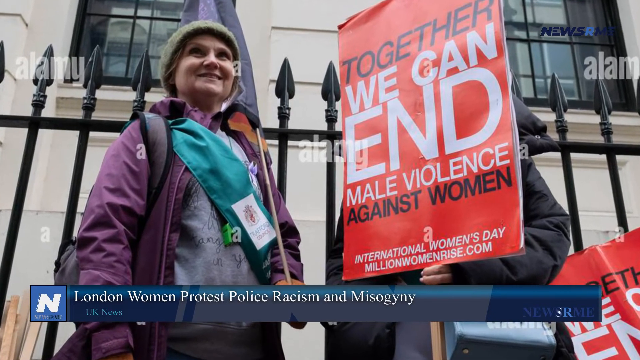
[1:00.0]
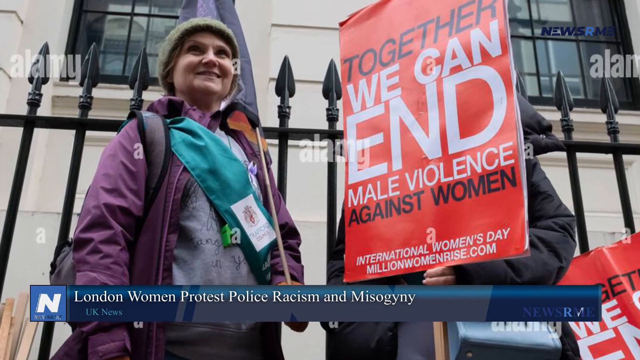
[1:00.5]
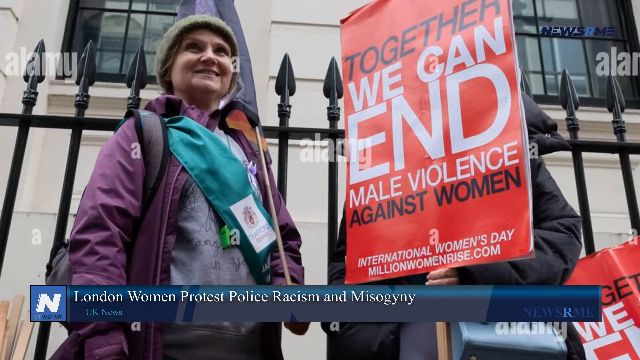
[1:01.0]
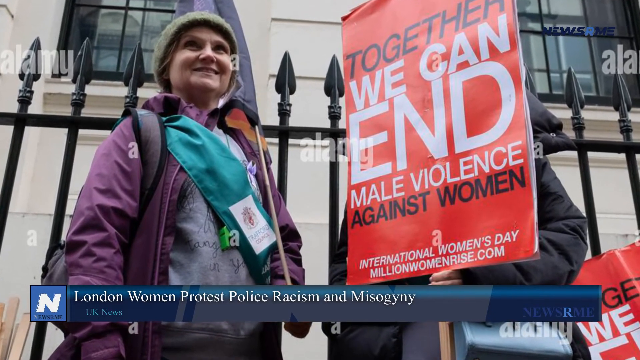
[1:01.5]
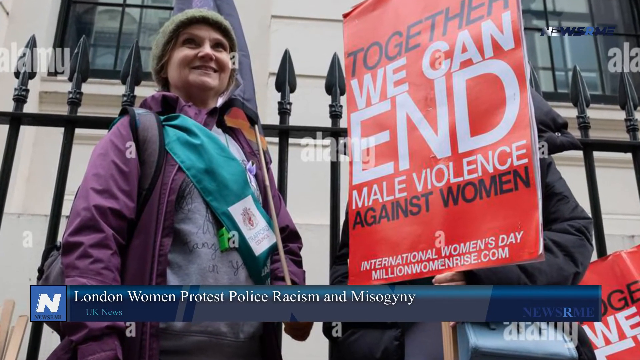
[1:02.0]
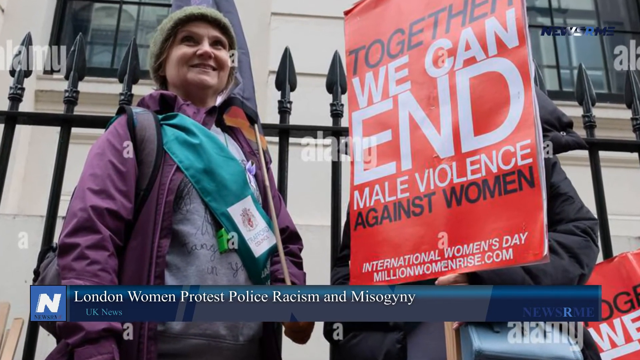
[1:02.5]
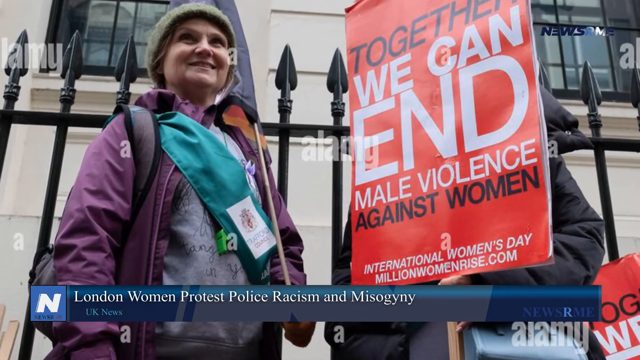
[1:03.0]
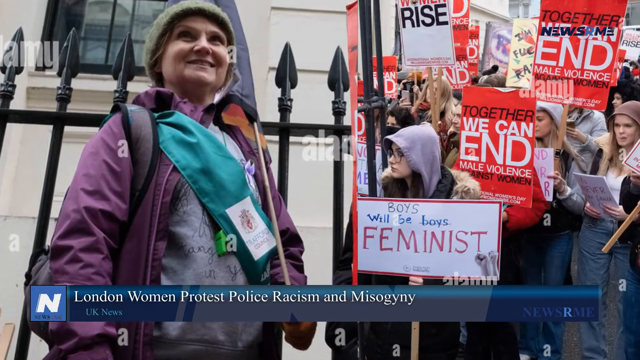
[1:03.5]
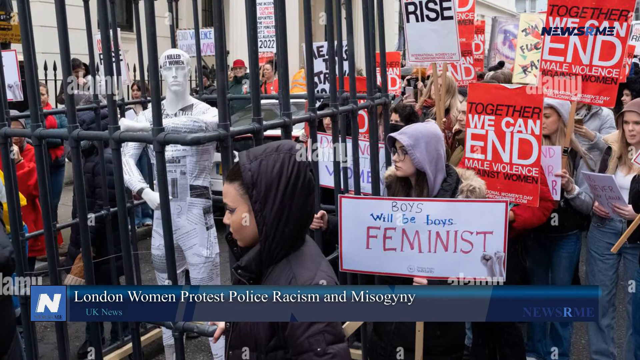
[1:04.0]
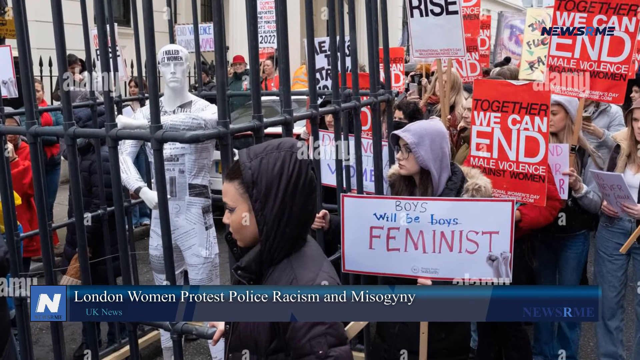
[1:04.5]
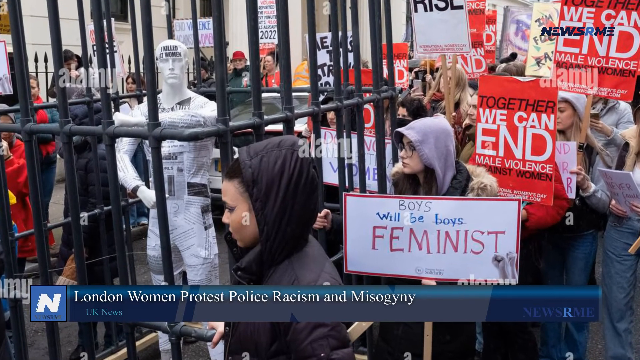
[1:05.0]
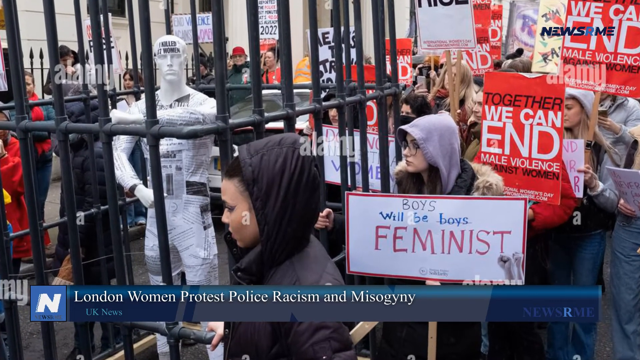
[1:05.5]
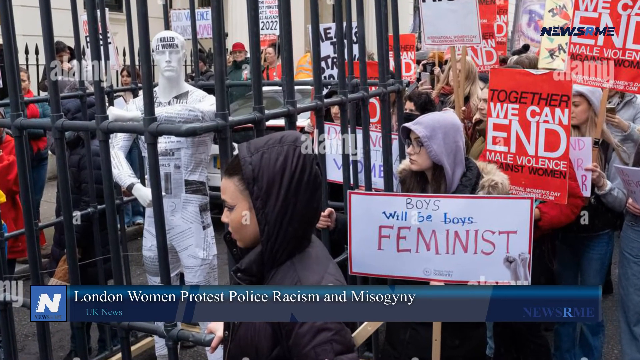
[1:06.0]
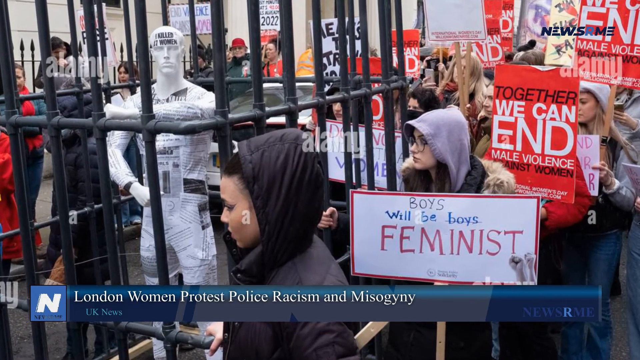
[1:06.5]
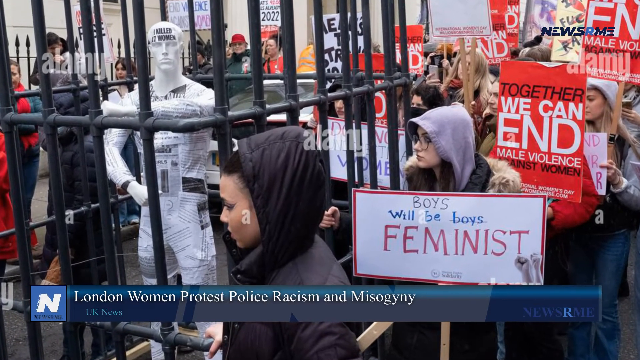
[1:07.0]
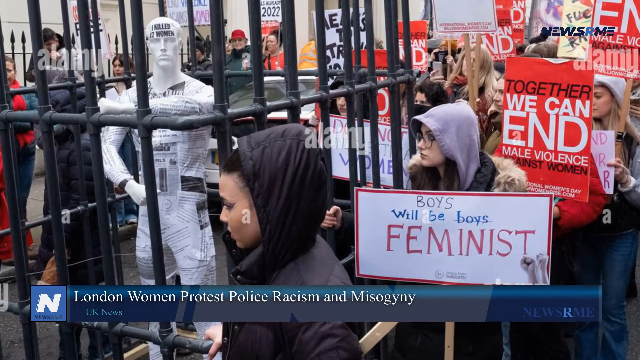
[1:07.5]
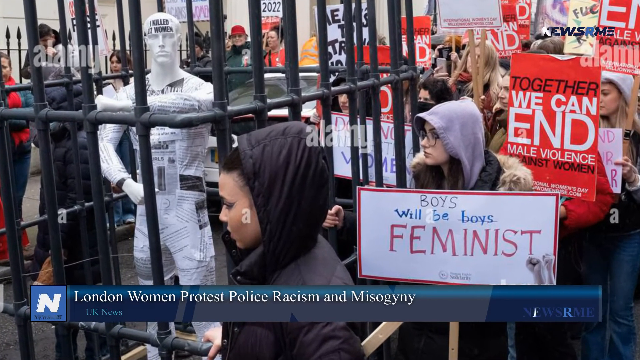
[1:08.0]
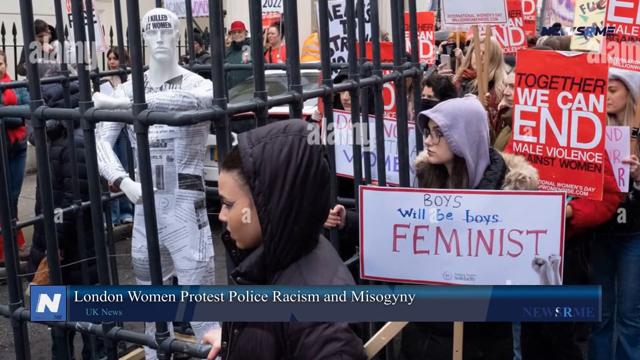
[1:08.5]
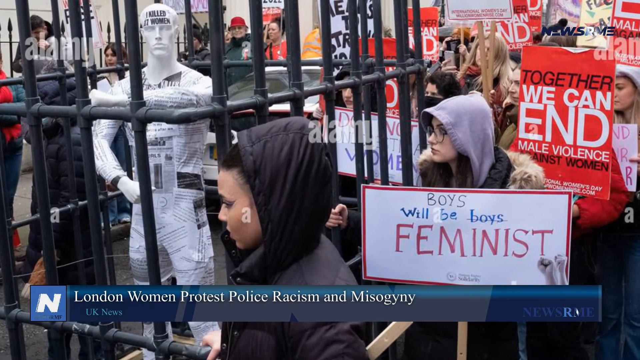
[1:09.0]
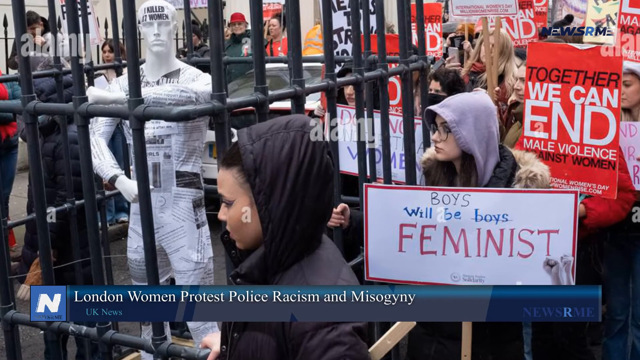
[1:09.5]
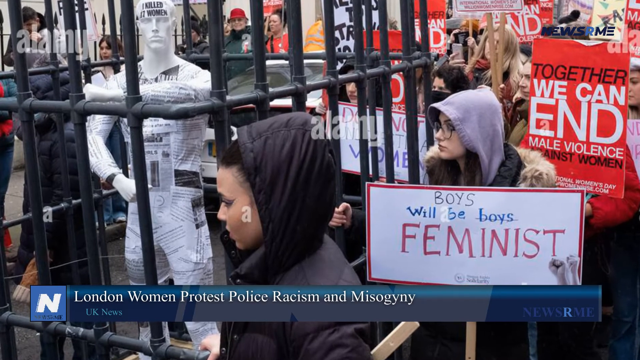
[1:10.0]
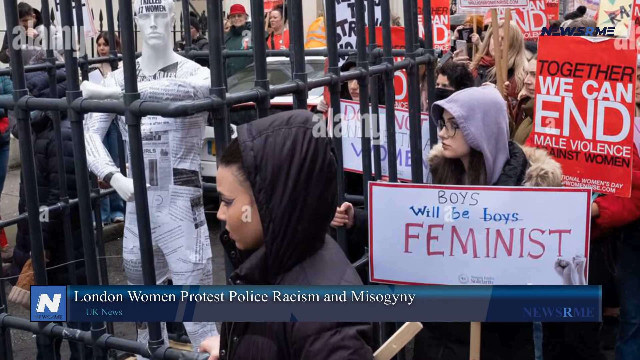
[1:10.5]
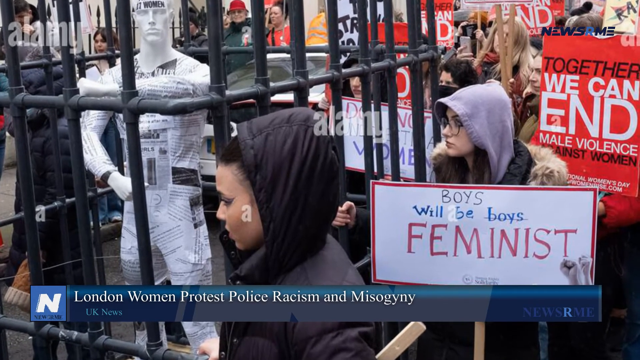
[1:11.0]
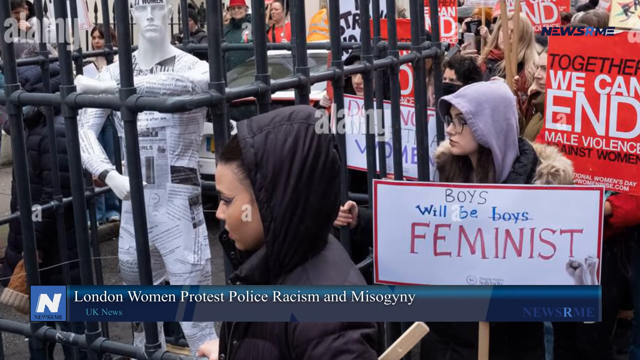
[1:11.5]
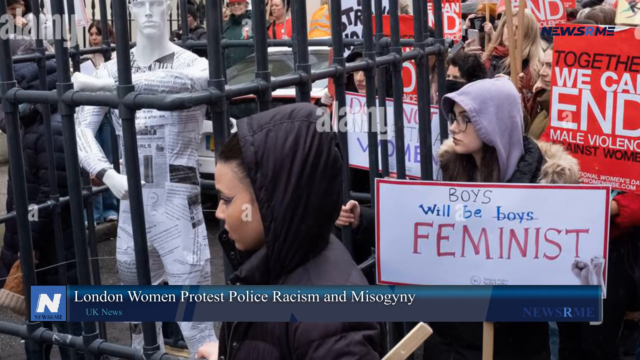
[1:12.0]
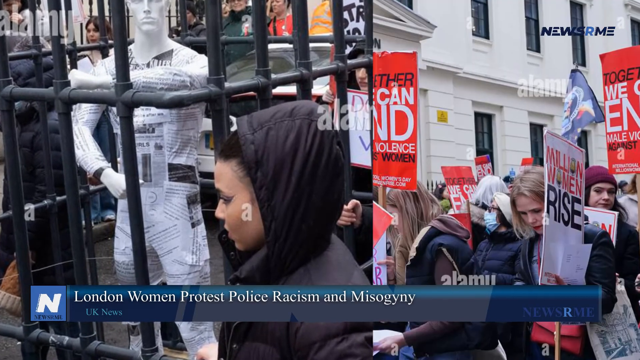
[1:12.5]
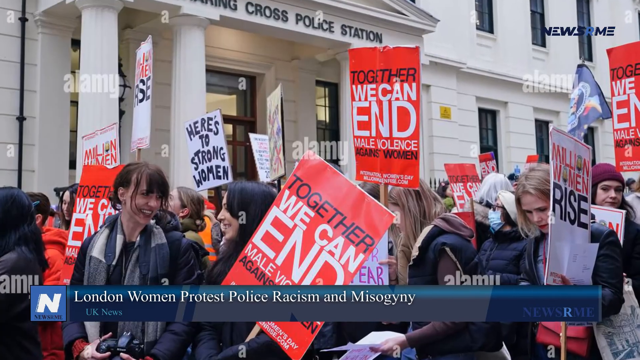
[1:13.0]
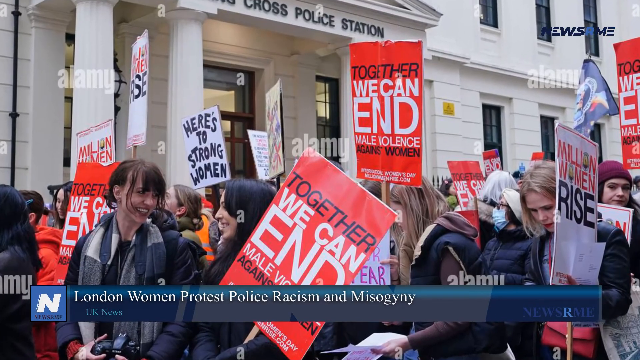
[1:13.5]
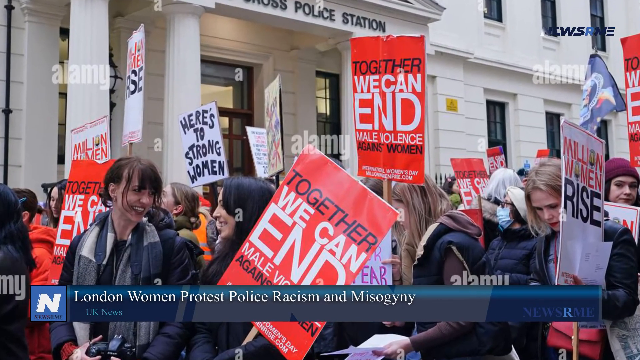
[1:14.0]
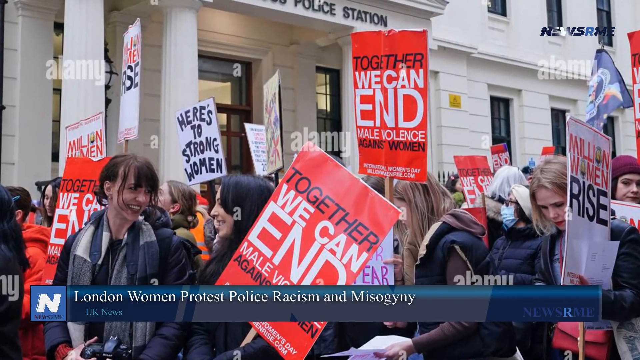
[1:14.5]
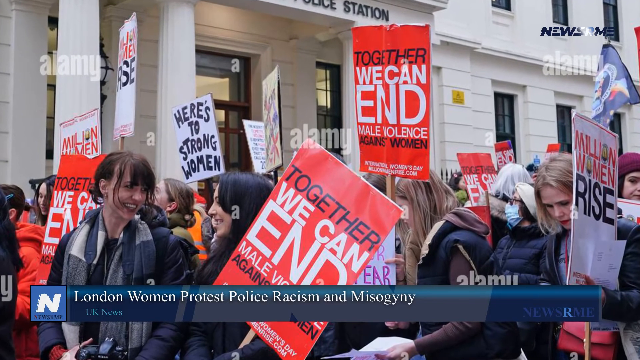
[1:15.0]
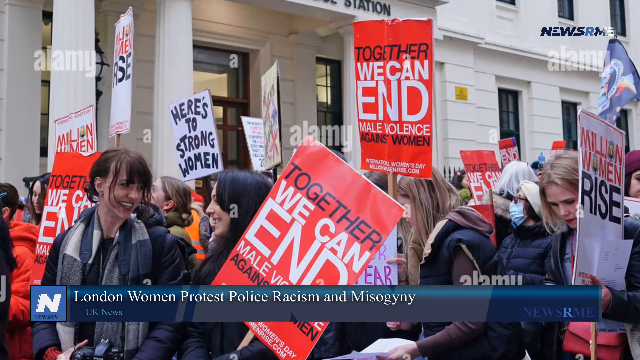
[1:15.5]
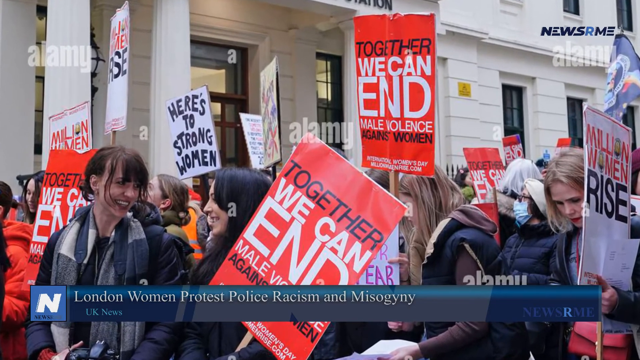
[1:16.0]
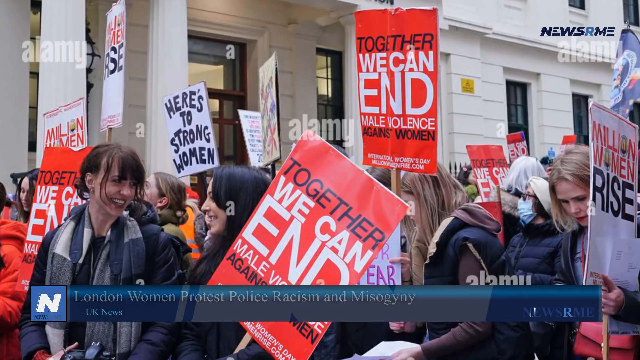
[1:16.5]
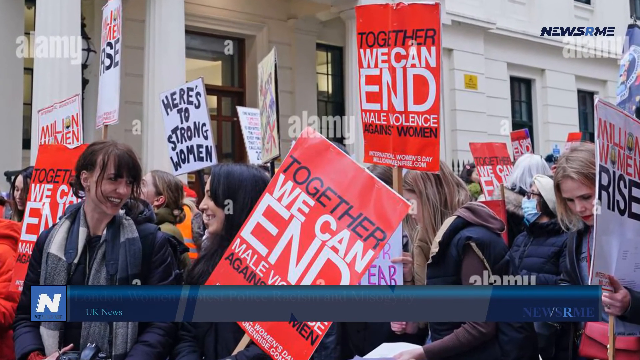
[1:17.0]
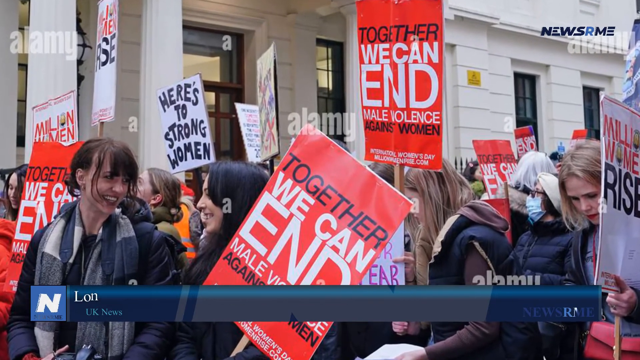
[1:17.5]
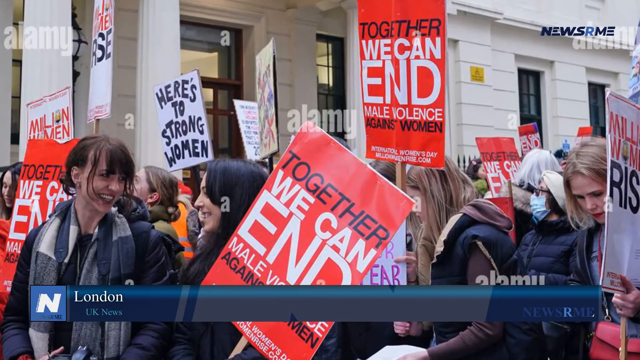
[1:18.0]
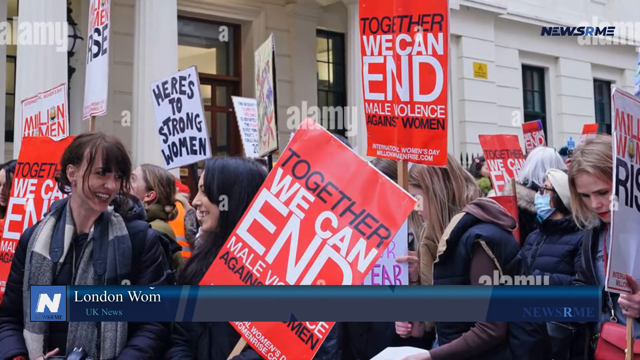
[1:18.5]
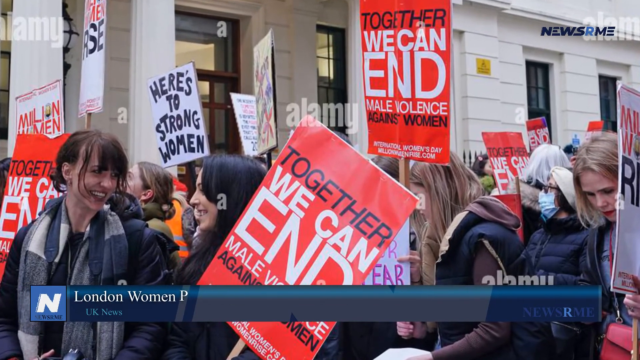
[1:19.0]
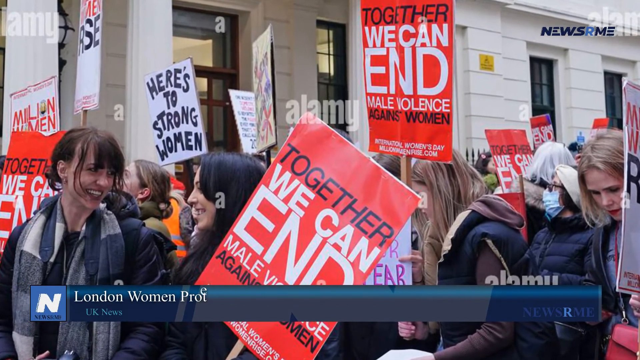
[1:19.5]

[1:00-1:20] Maybe three or four more still images from the protest appear. In the first, a sign with a red background is clearly visible, reading "together we can end male violence against women," with smaller text below reading "International Women's Day, millionwomenrise.com." The person holding the sign wears a black jacket, and their face is not visible. To their left is a smiling woman in a purple jacket and a hat who appears to be wearing a backpack. Behind them are a gate and a building, apparently the same building as the police station in another photo. The next image is another shot of the crowd with the cage holding the mannequin, which looks to be covered in newspaper clippings. In that photo, apparently, one person holds a sign that says "Boys will be boys," with "feminists" underneath.